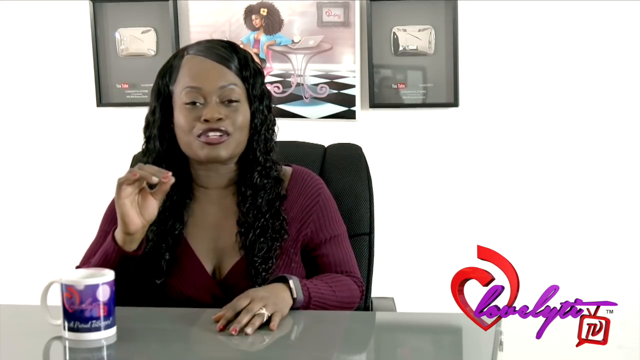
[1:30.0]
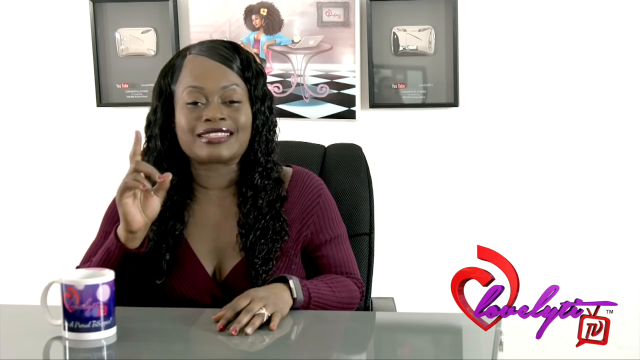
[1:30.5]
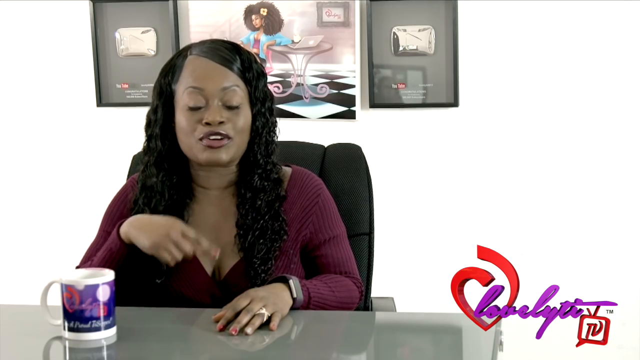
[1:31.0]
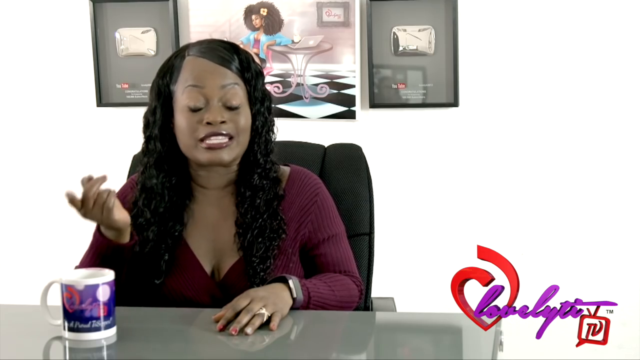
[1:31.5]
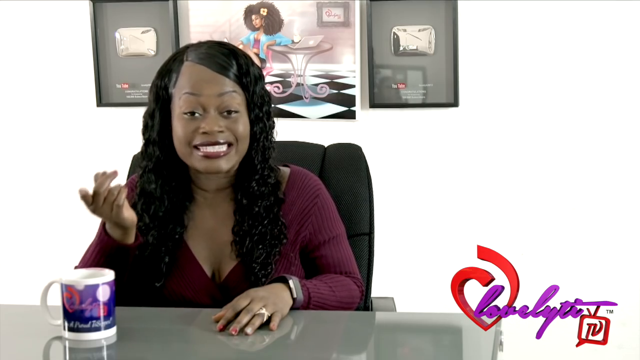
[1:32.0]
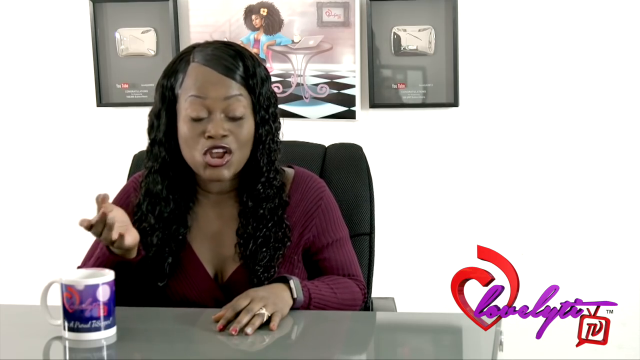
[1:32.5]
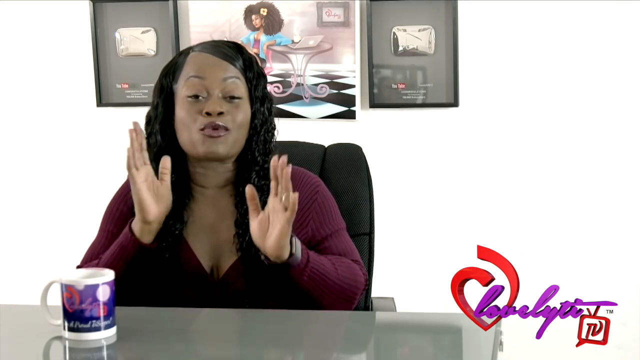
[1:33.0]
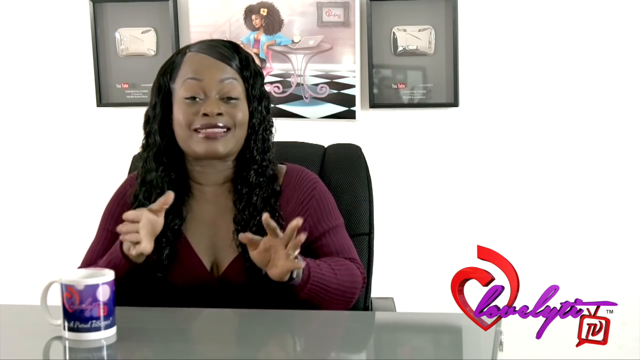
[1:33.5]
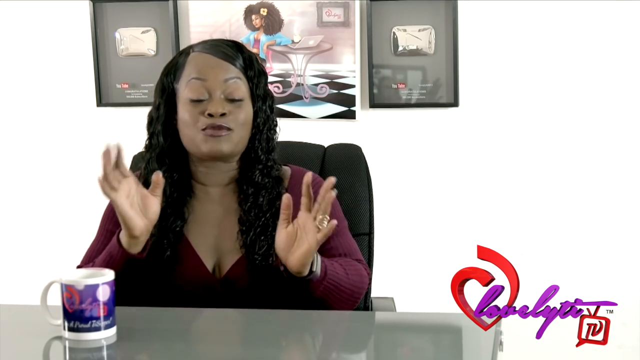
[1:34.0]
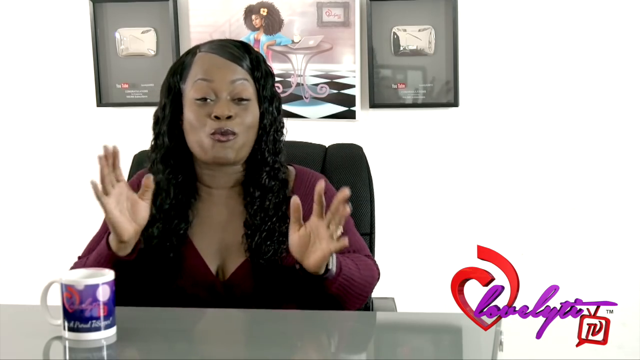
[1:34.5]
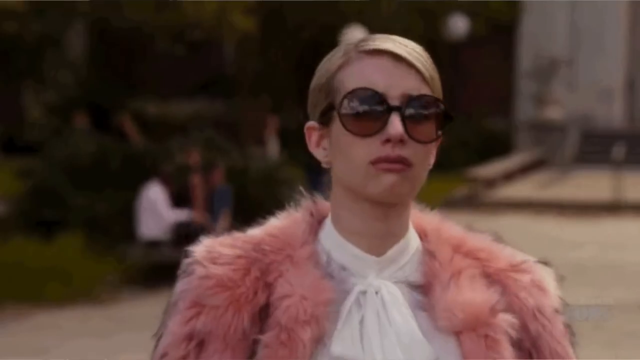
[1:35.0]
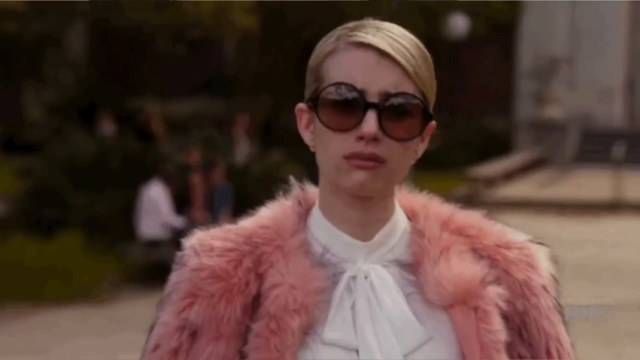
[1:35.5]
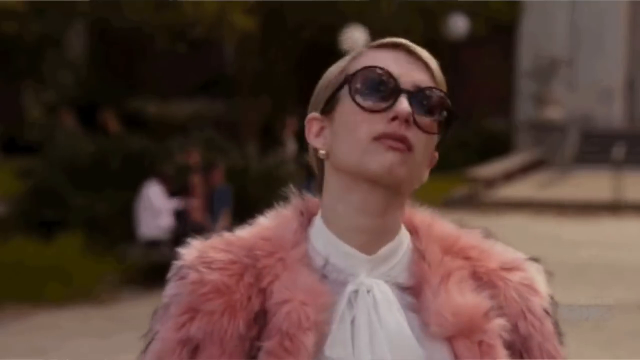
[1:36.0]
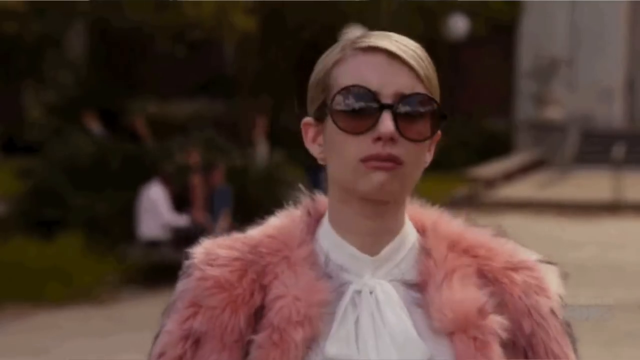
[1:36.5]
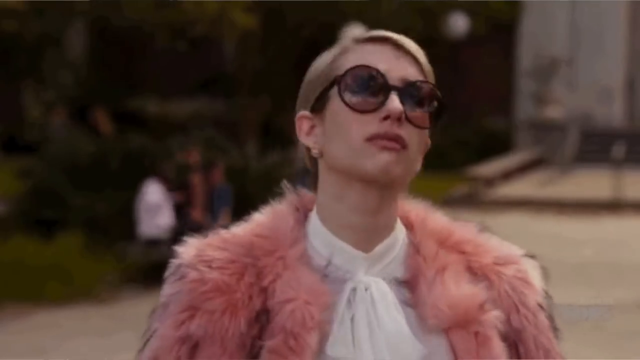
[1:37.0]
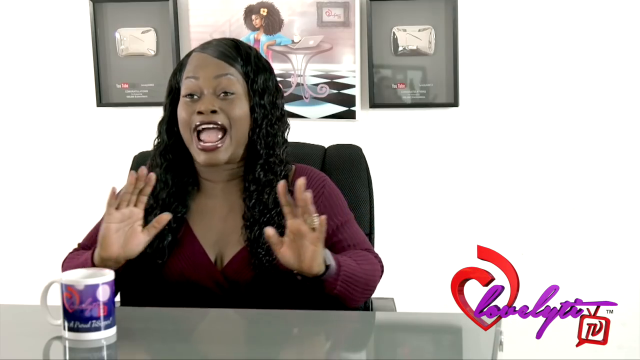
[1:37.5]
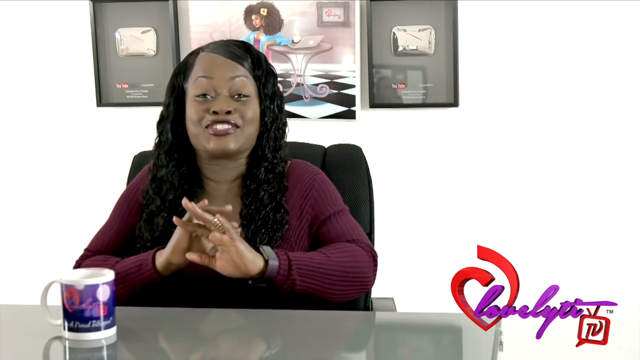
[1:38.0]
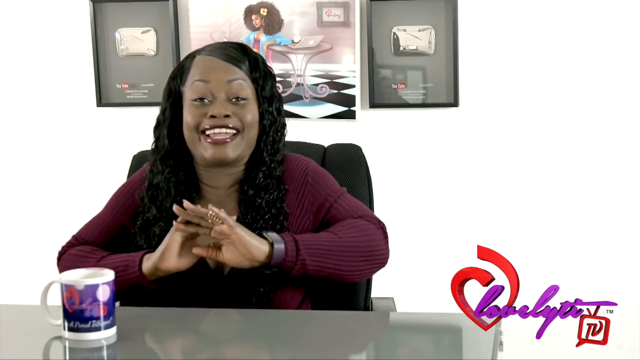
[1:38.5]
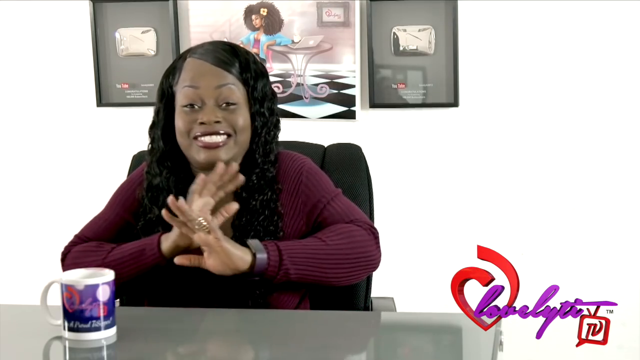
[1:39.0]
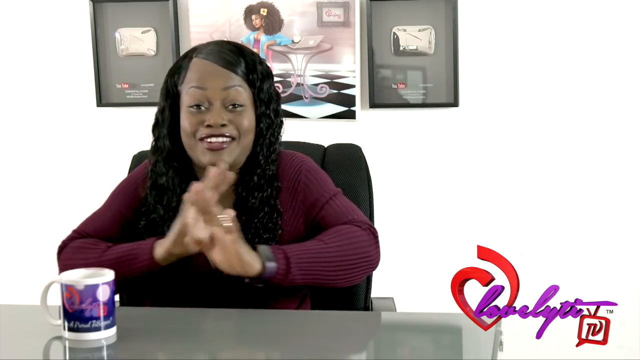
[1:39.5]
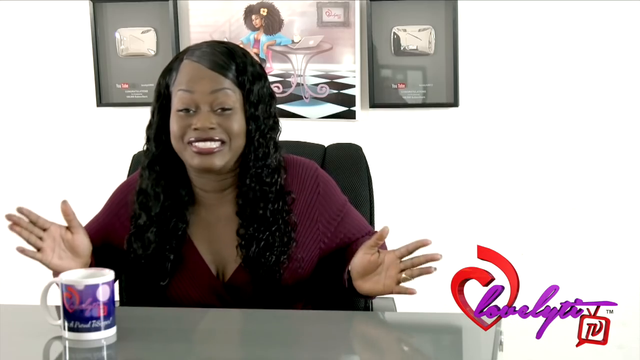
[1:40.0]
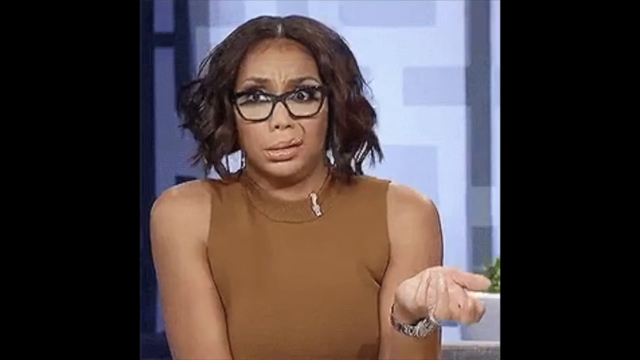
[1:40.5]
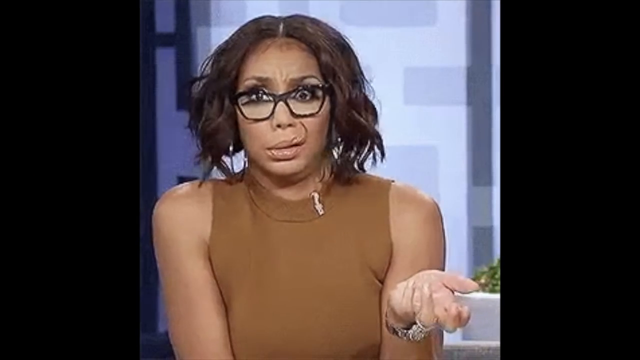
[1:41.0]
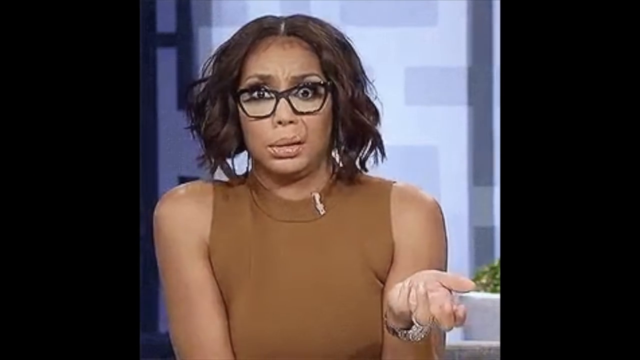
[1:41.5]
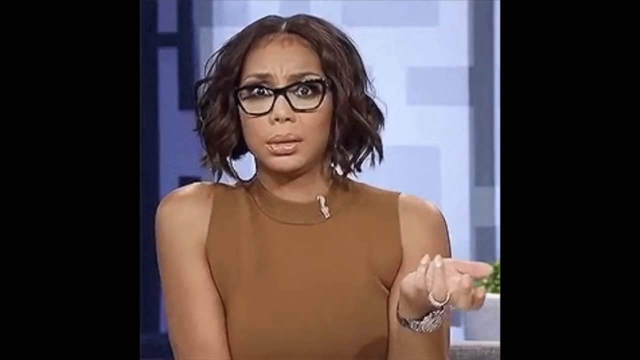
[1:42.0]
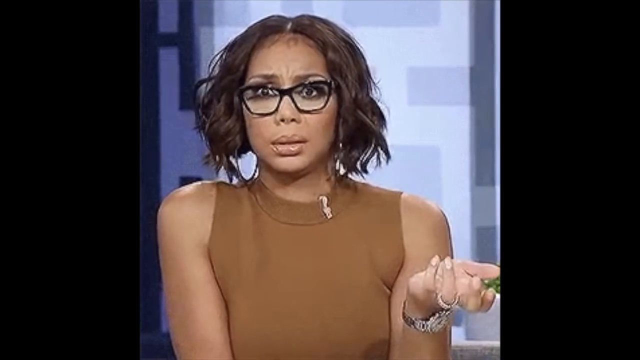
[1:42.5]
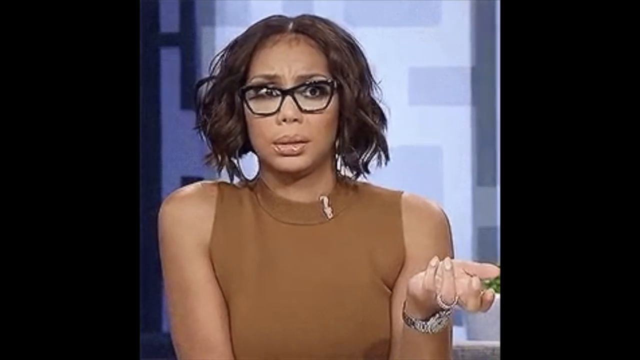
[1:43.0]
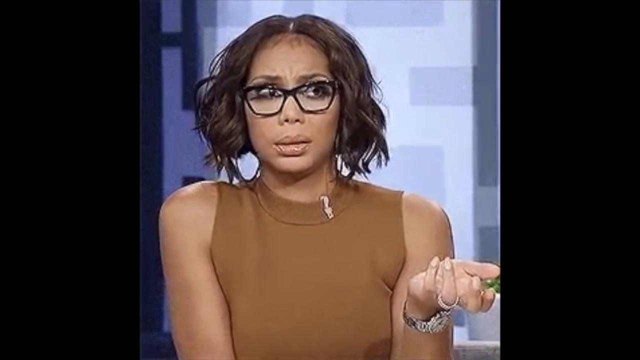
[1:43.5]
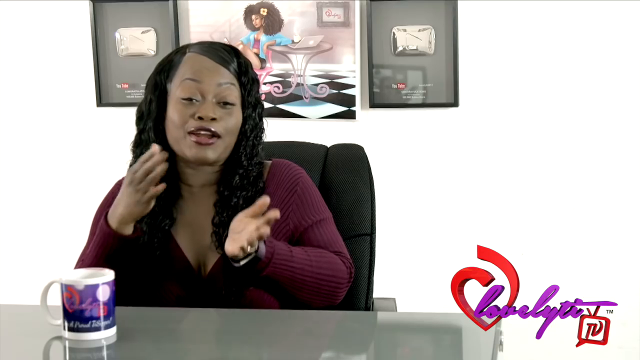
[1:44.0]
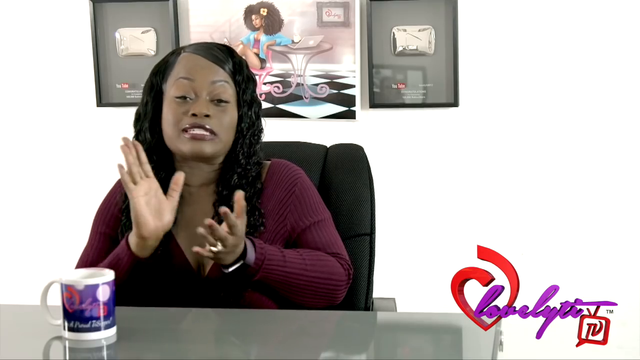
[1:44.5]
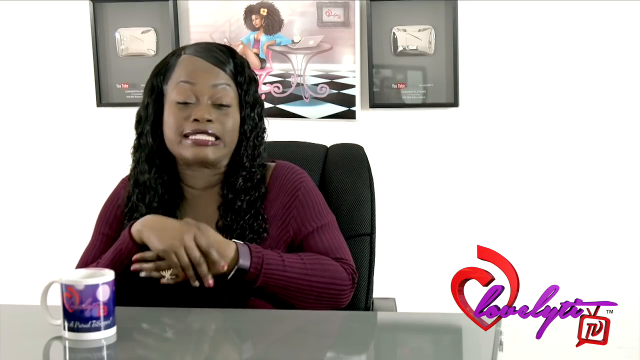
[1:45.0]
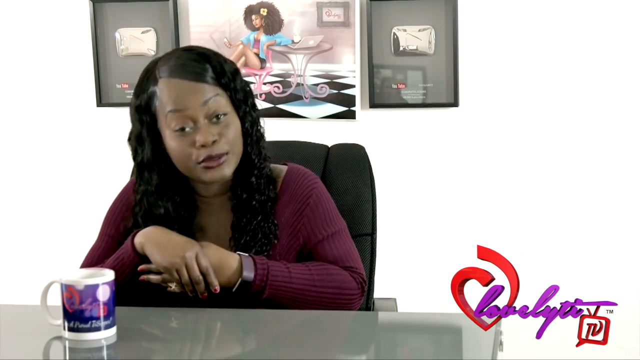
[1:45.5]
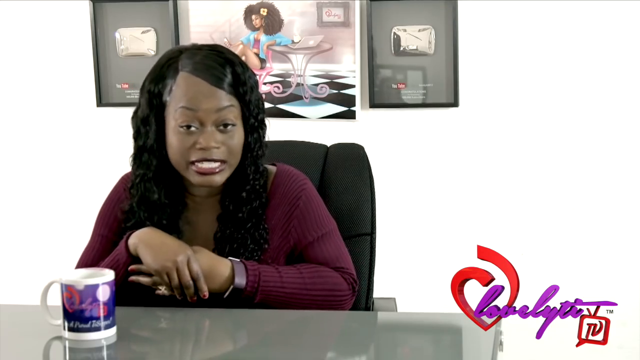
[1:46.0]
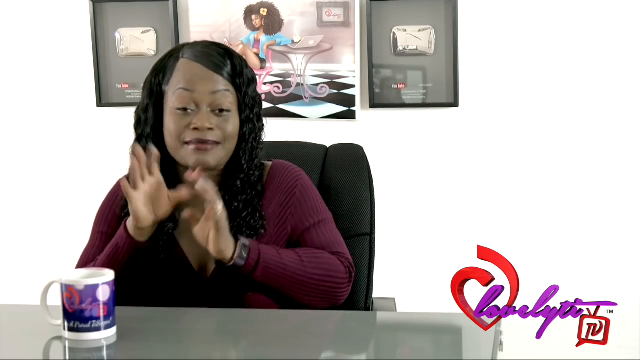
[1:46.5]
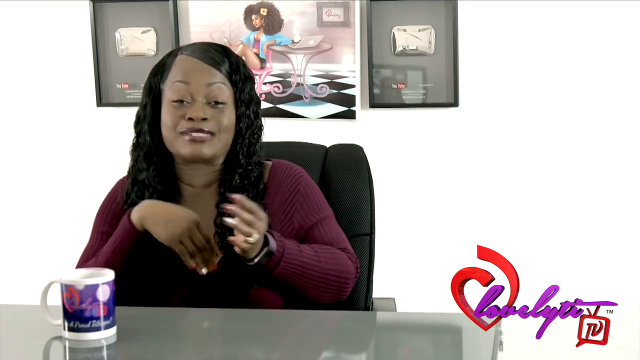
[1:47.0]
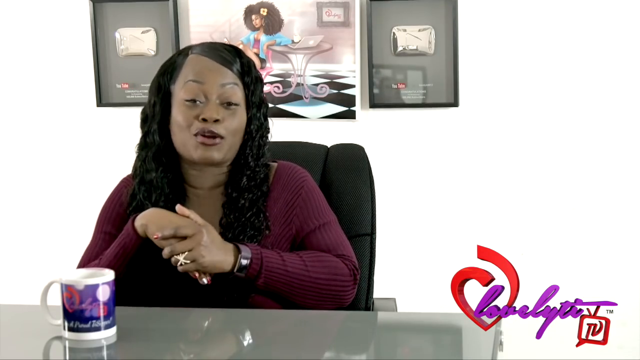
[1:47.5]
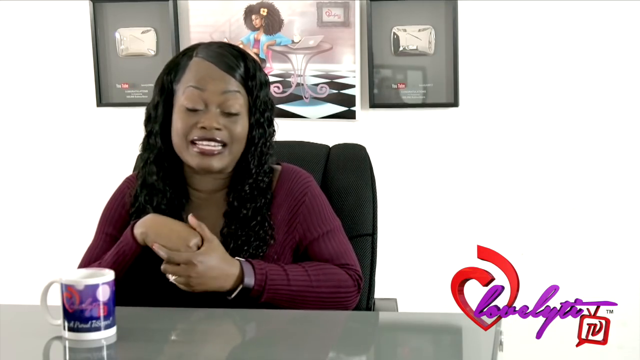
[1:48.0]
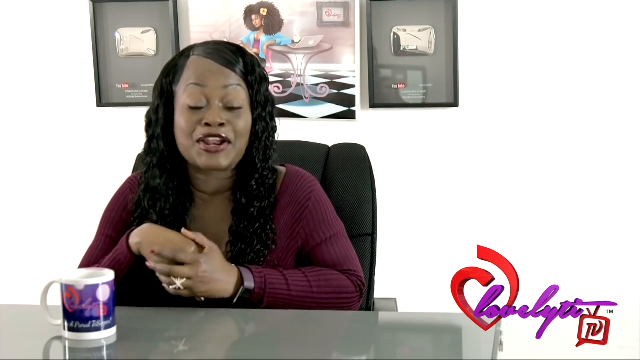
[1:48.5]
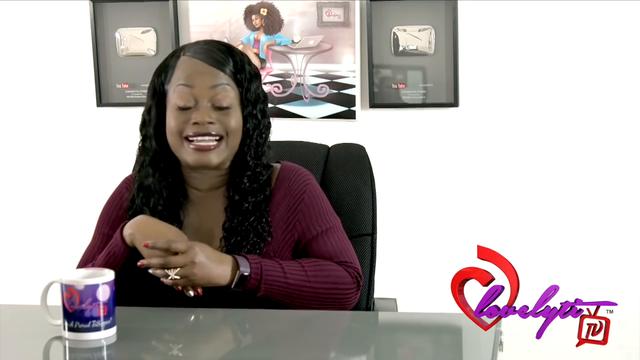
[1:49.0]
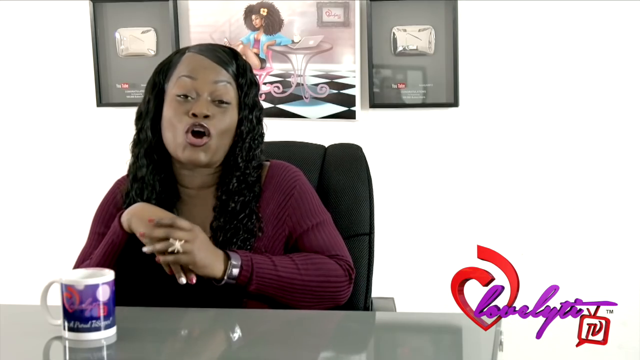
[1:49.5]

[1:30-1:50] The content creator still sits at the table in her black office chair. The upper part of her left arm is down at her side, with her left forearm in front of her body, lying gently on the desk in front of her; she appears to wear a wristwatch on her left wrist. Her right arm is bent with the elbow resting on the desk, and she pinches the fingers of her right hand together as she speaks, looking directly into the camera and smiling, using the pinched fingers to emphasize her words. She points her forefinger up, lowers it, then raises both hands and moves them in a sweeping motion in front of her body. Next comes an image of Tamar Braxton with a perplexed look on her face, wearing glasses.